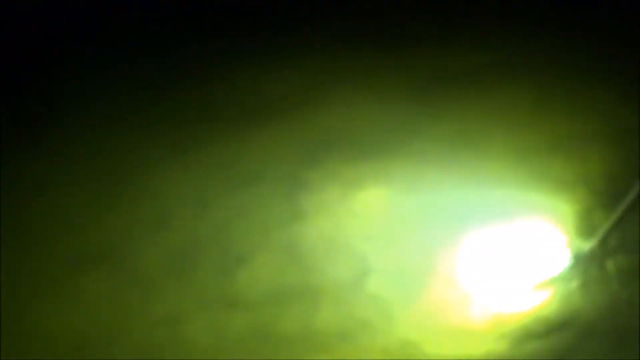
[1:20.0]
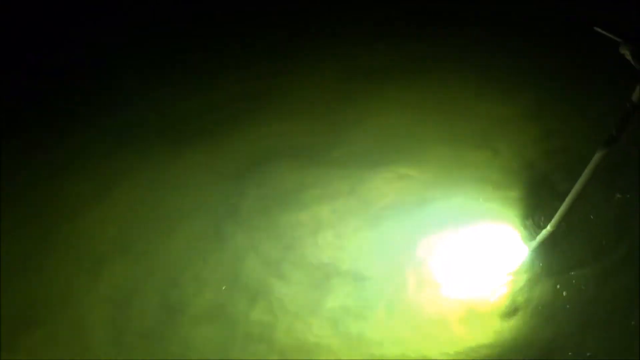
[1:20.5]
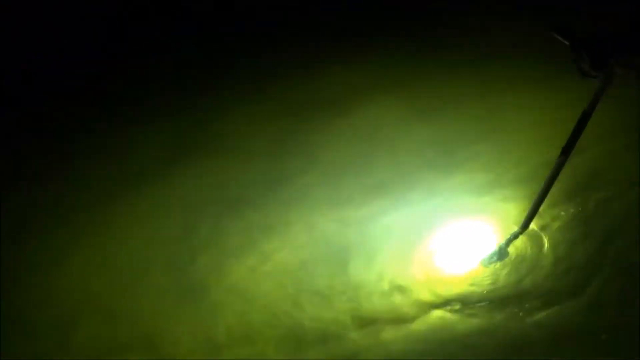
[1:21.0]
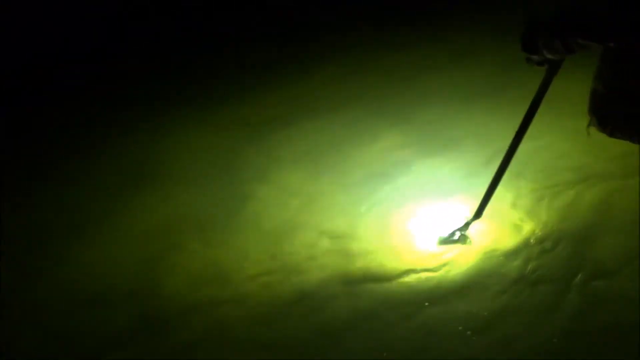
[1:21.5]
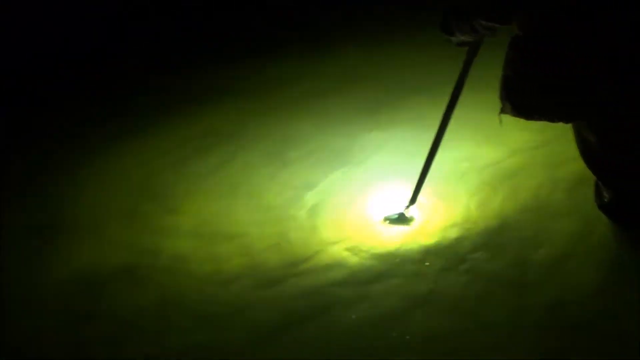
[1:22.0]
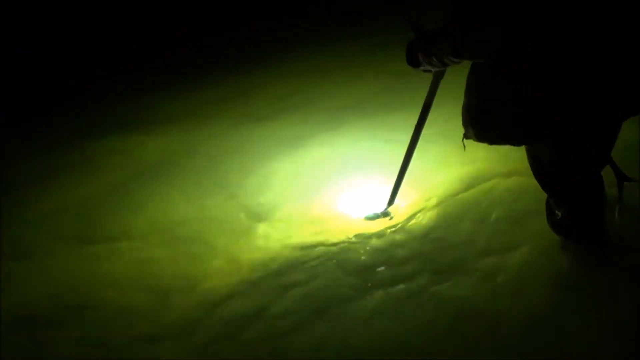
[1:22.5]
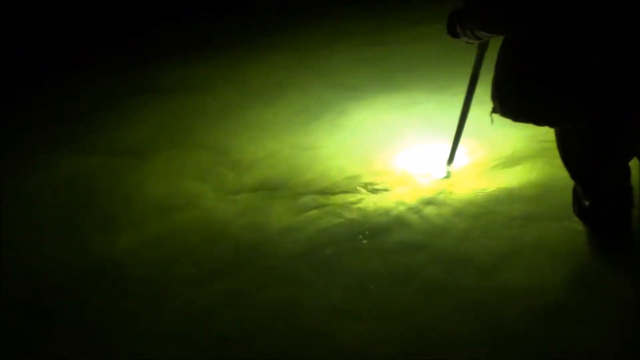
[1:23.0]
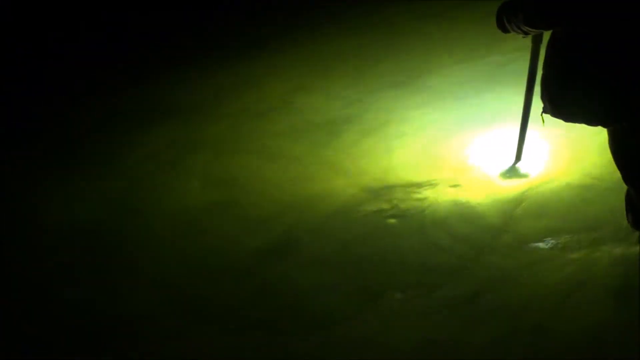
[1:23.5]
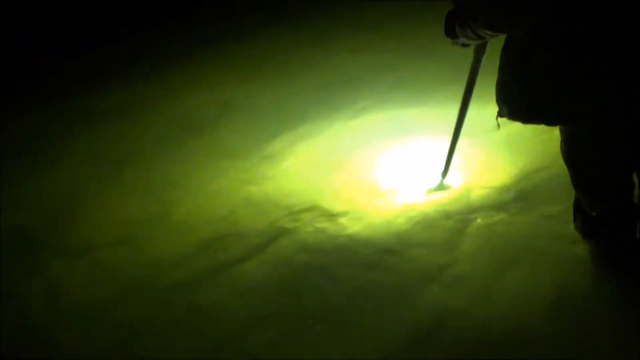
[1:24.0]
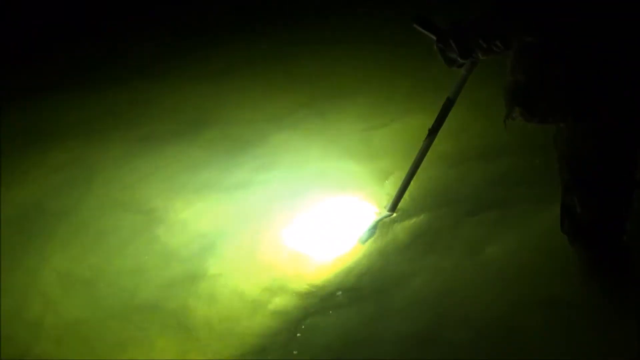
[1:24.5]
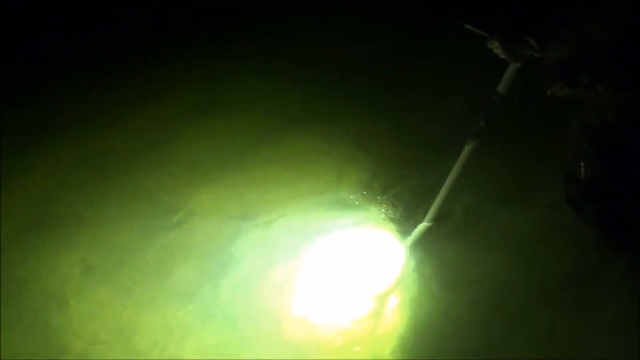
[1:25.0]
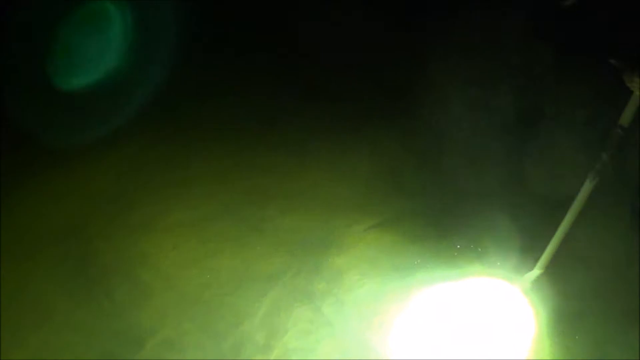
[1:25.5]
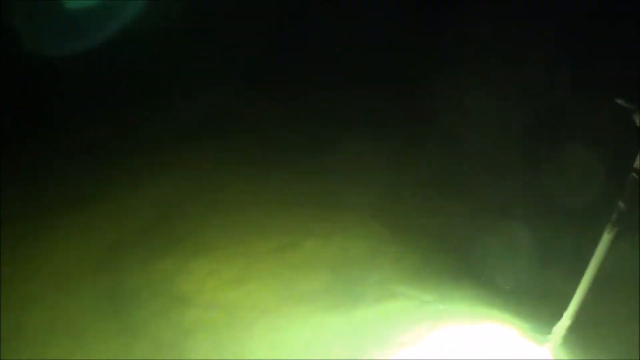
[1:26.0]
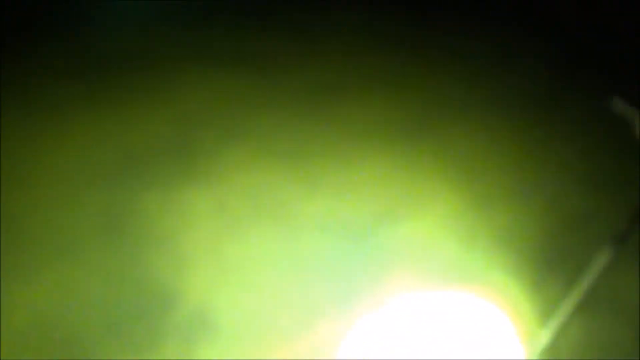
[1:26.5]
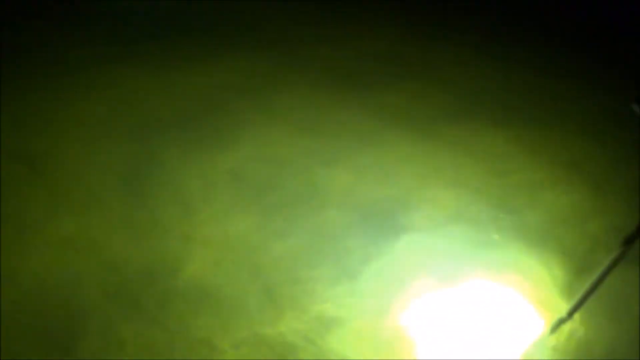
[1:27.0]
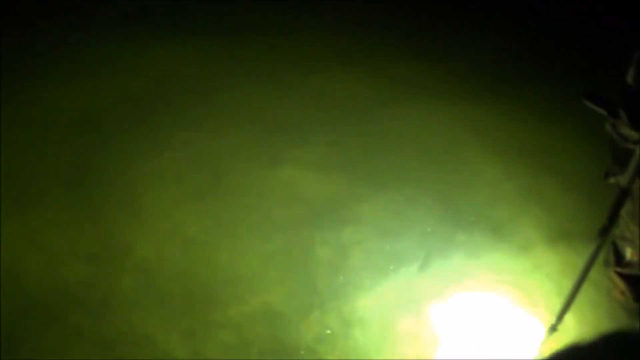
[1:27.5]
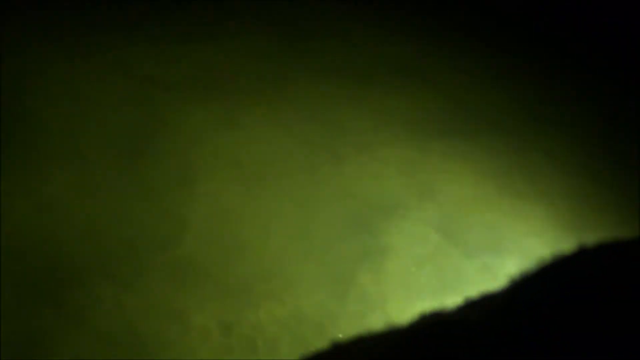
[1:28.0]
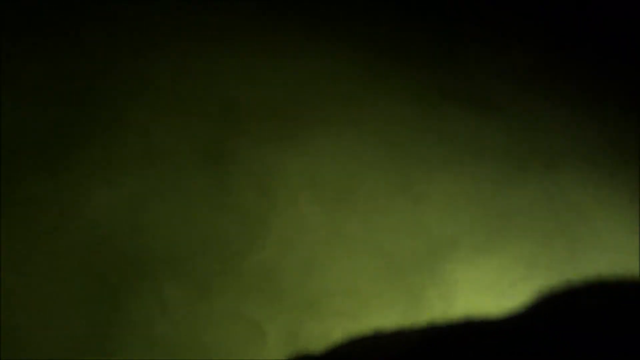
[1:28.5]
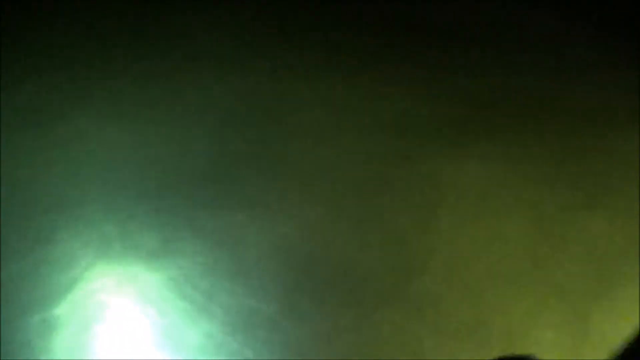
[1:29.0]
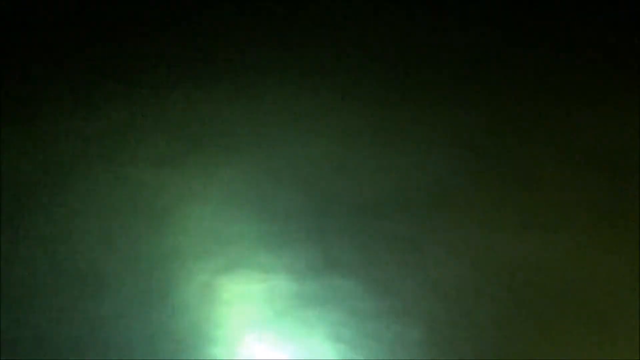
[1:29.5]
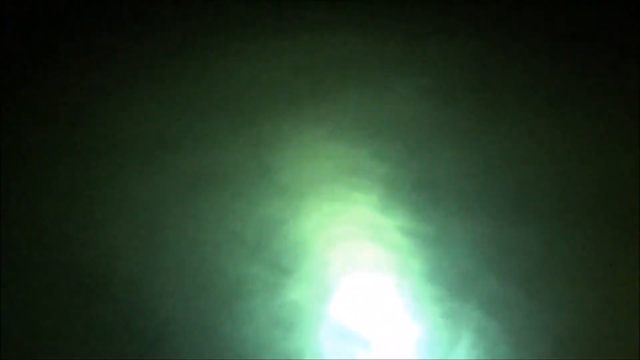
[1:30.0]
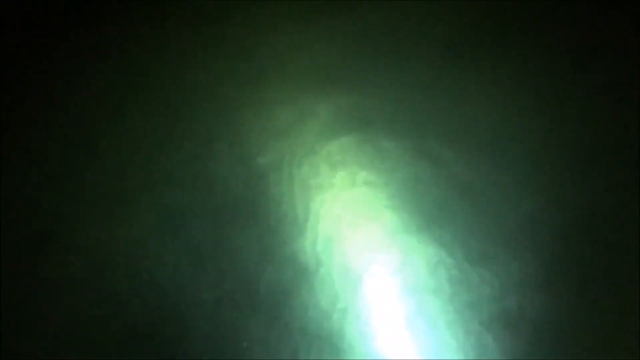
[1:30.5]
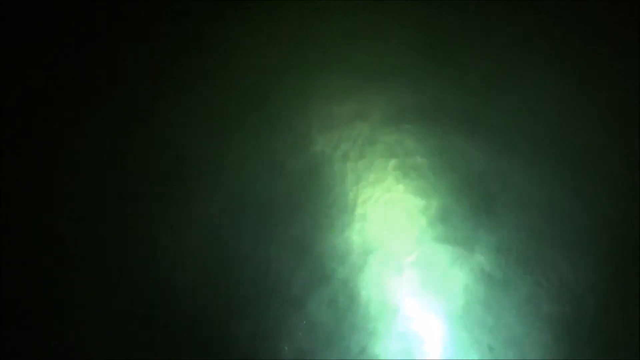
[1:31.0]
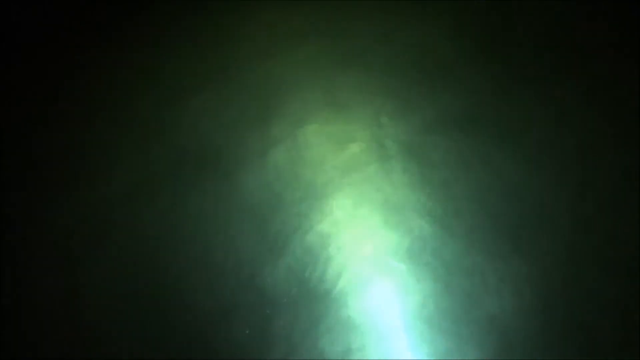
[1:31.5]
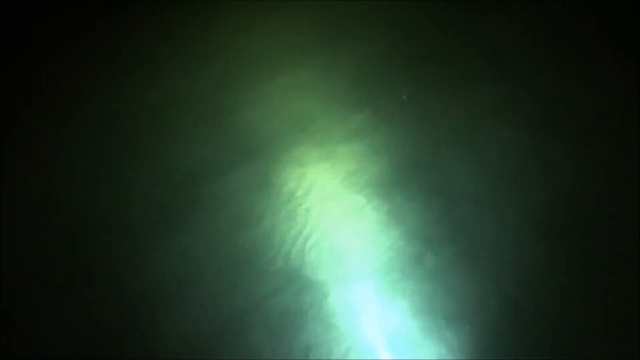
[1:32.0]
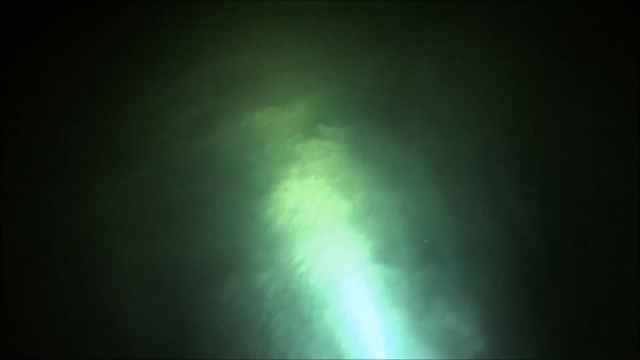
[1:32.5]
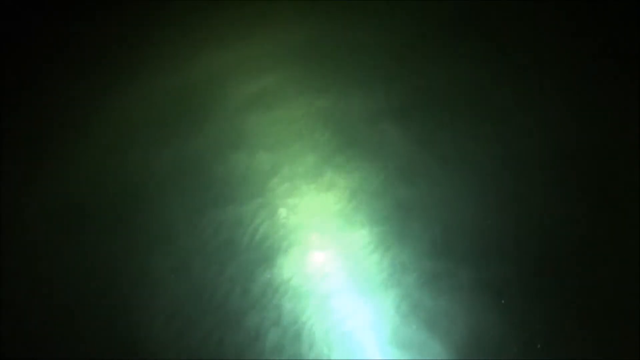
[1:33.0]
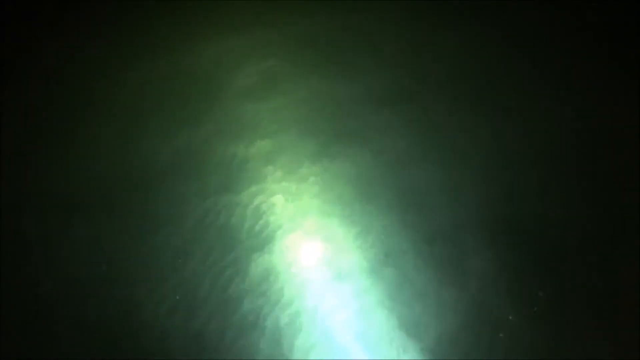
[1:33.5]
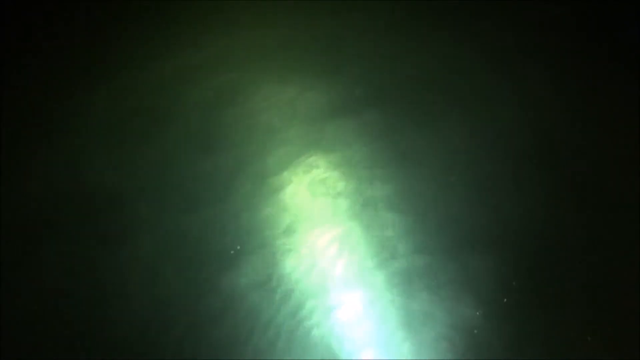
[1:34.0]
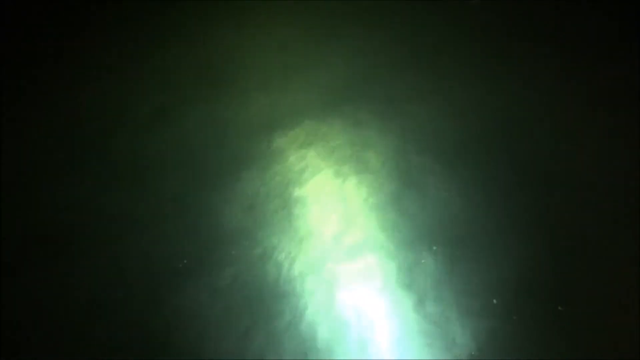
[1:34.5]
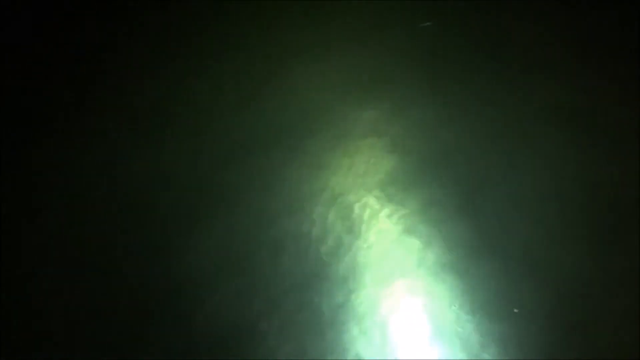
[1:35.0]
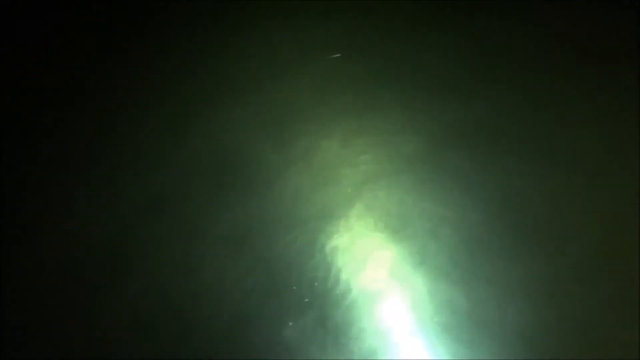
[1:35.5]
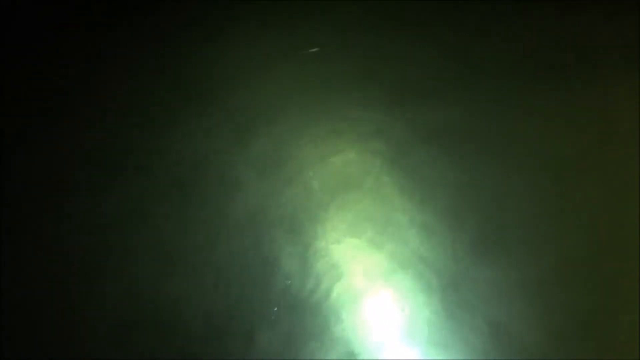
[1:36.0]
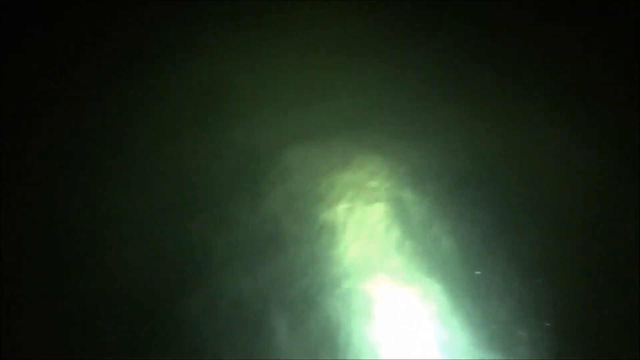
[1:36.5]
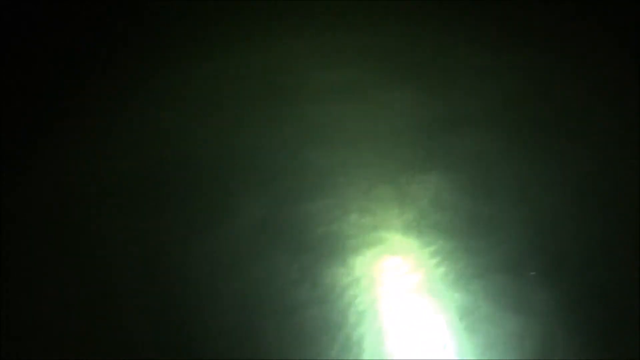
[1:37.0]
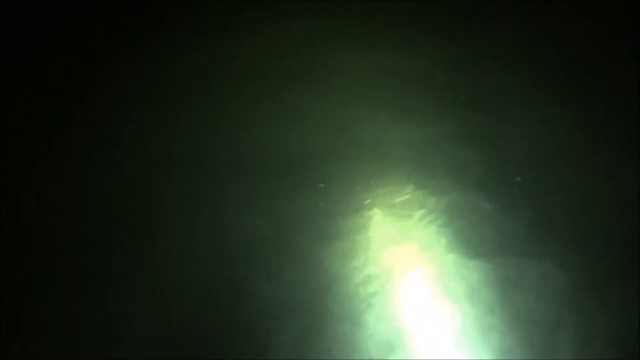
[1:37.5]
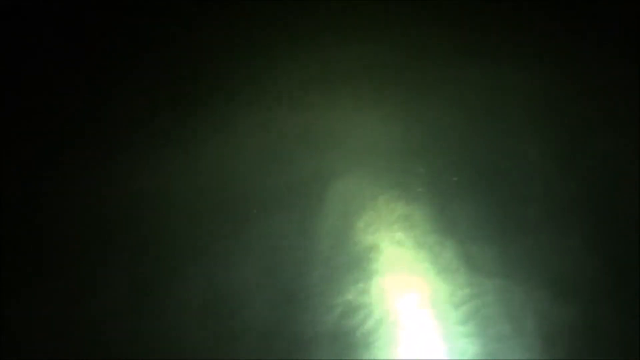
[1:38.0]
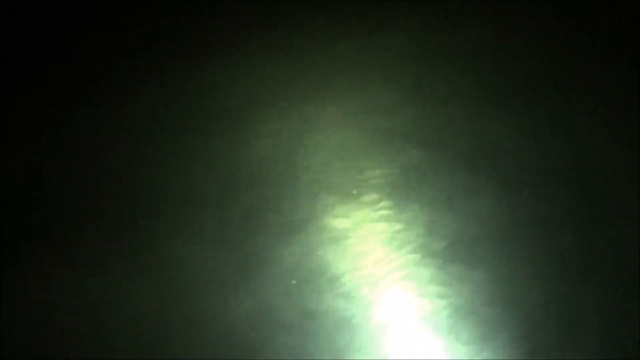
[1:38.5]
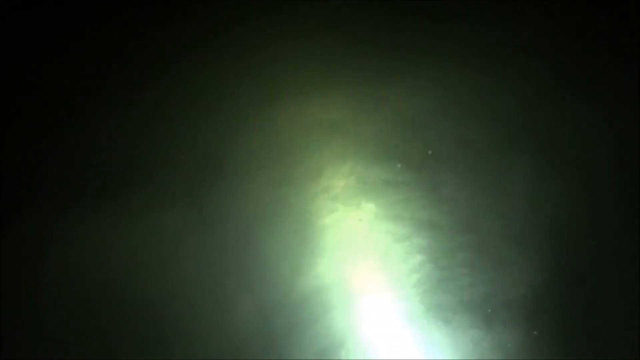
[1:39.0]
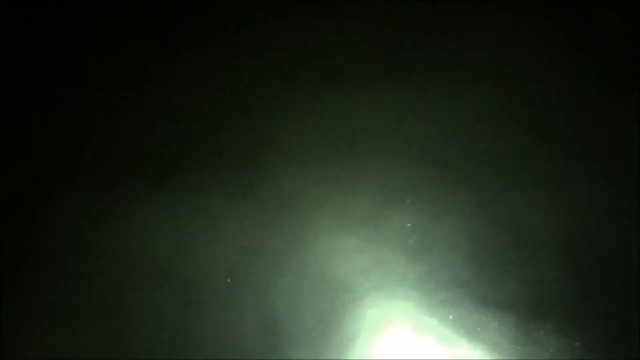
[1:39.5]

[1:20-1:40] The water continues to be illuminated, and it becomes clear that the light under the water comes from the device that looks like a black float or black rim, which submerges in the water and emits a fairly powerful light. The stick the man holds comes out of the water, and he moves it from side to side, illuminating what is under the water.